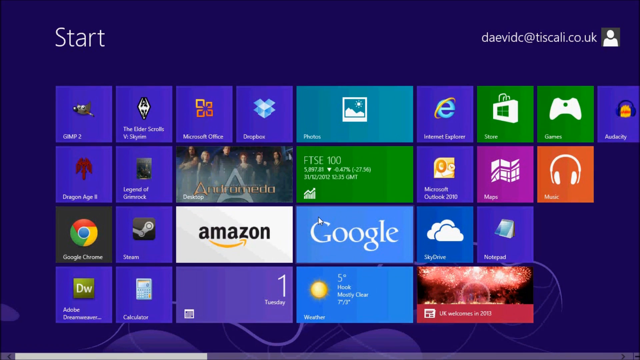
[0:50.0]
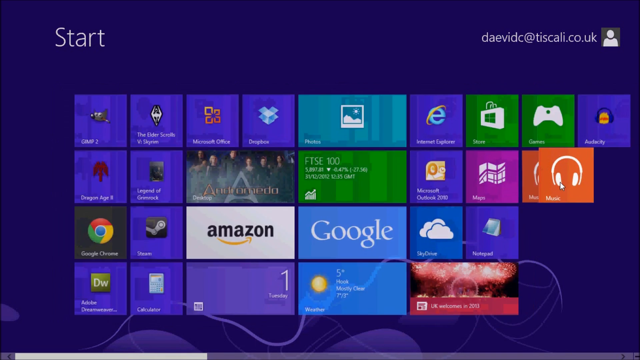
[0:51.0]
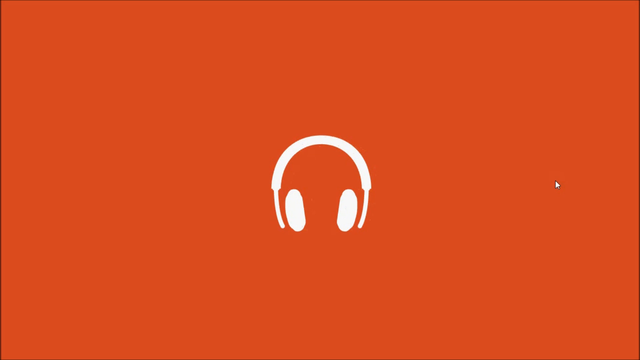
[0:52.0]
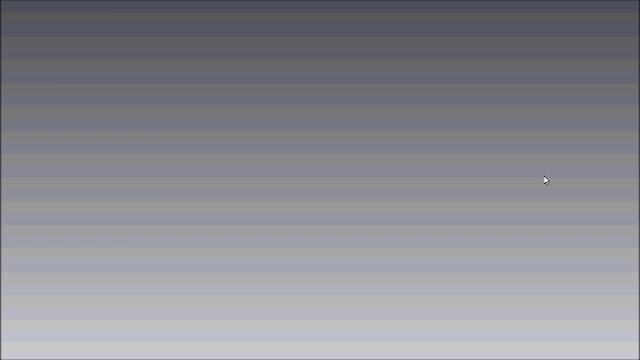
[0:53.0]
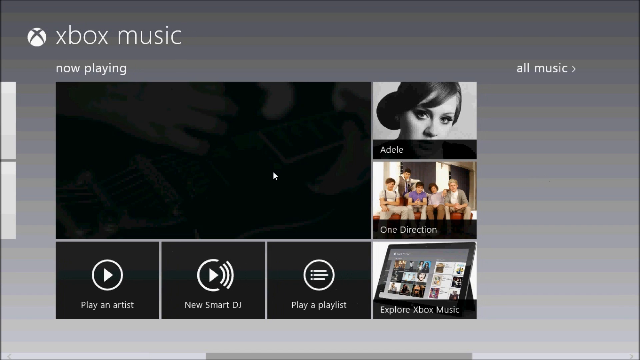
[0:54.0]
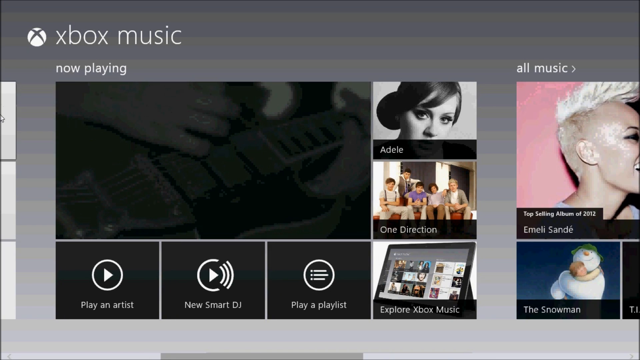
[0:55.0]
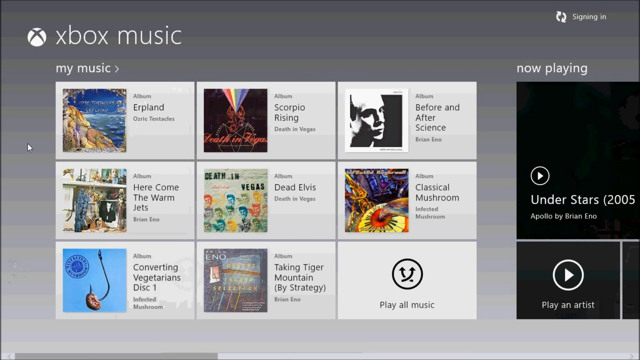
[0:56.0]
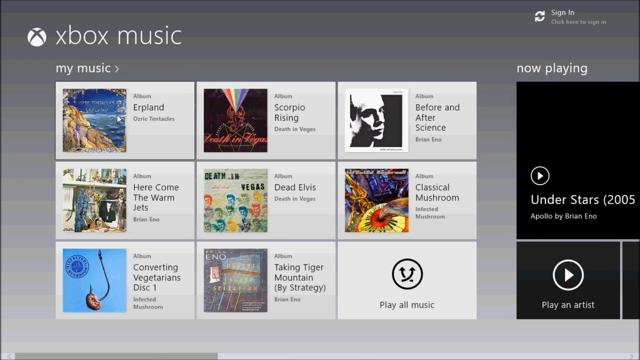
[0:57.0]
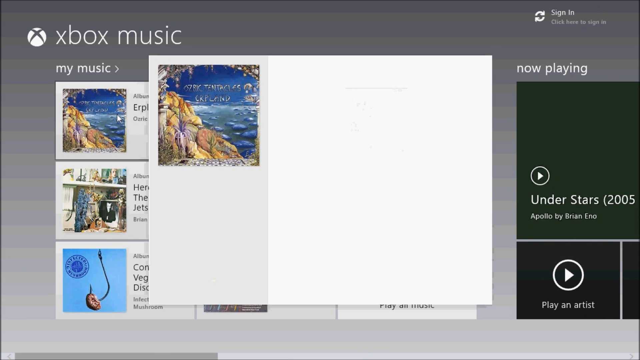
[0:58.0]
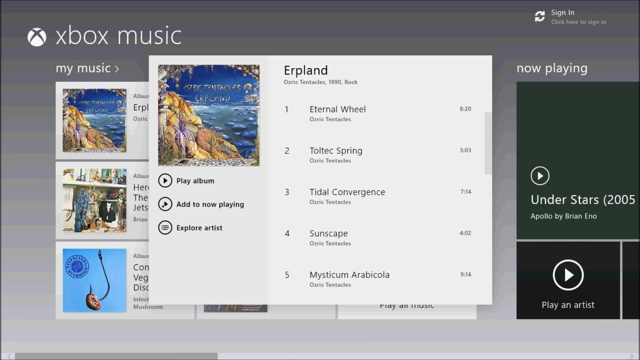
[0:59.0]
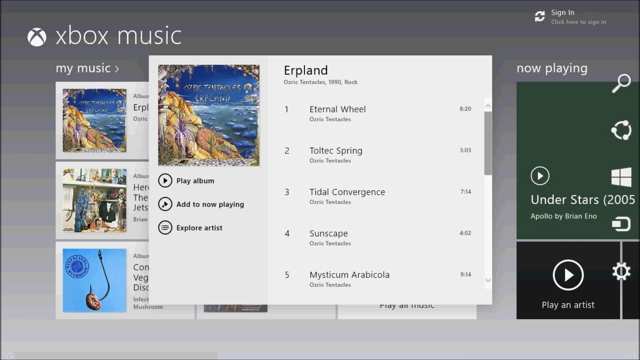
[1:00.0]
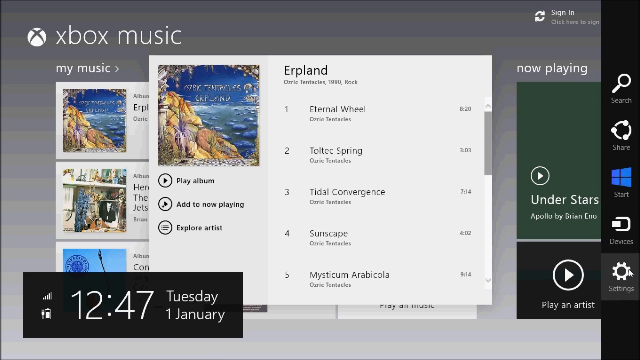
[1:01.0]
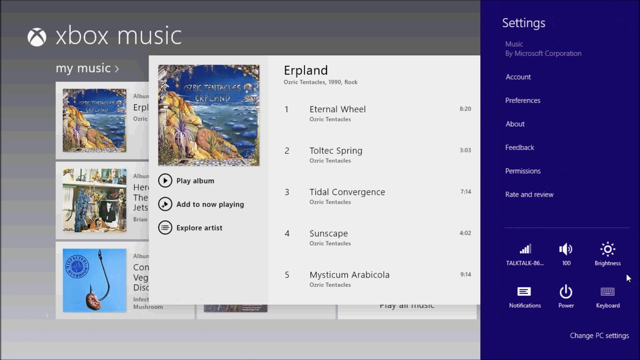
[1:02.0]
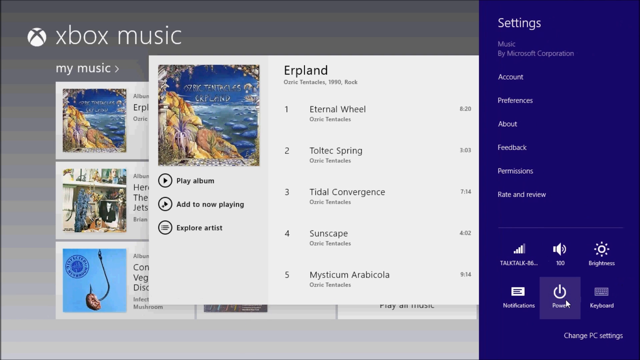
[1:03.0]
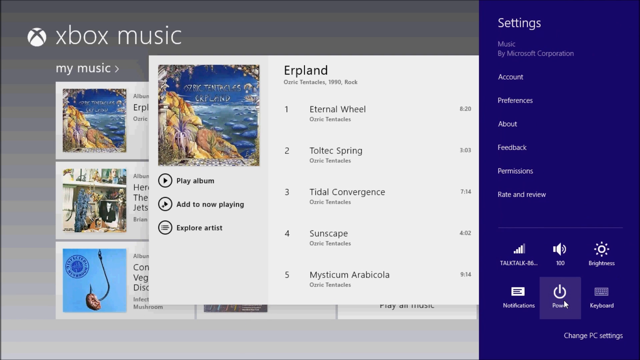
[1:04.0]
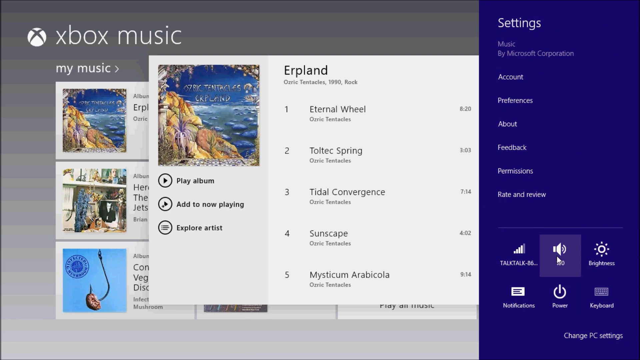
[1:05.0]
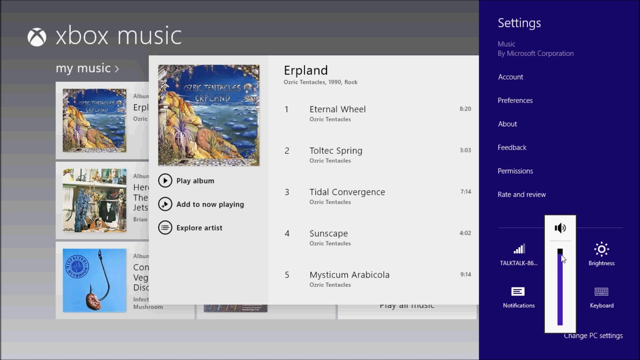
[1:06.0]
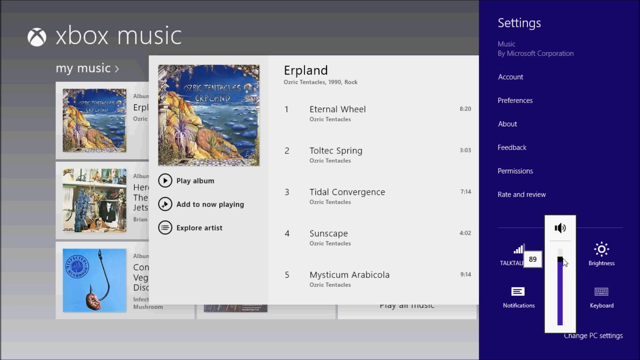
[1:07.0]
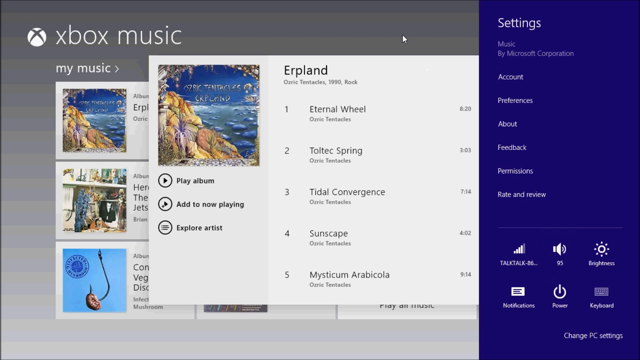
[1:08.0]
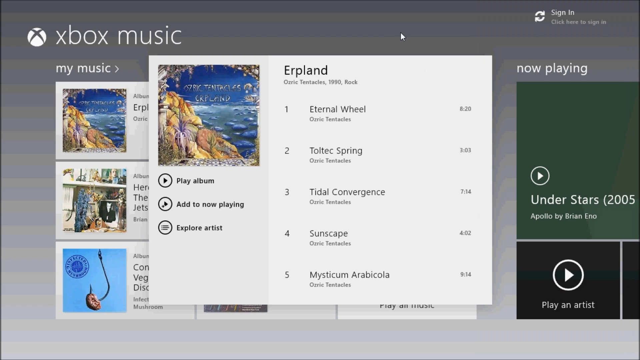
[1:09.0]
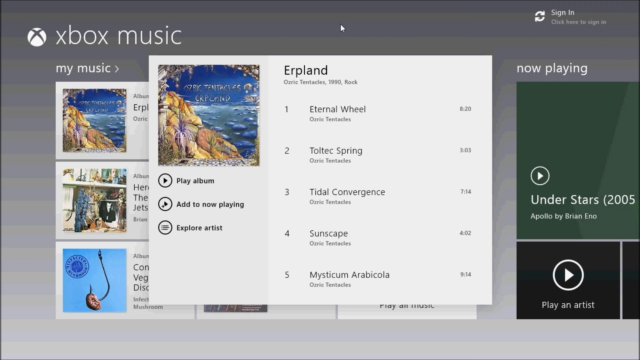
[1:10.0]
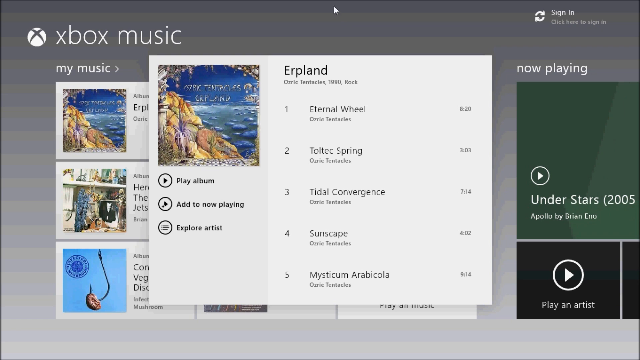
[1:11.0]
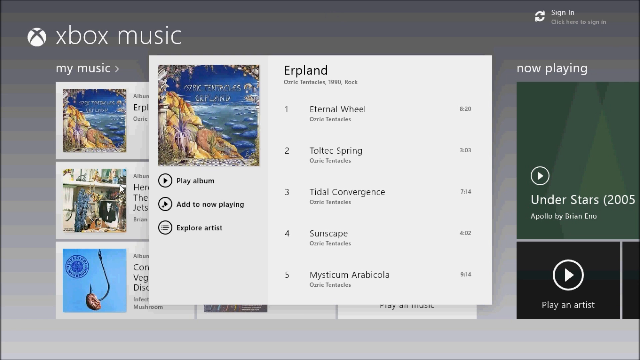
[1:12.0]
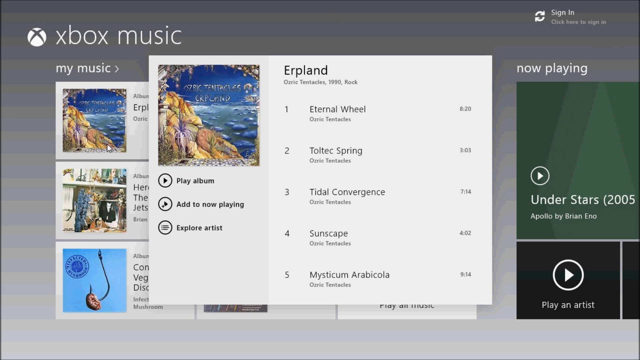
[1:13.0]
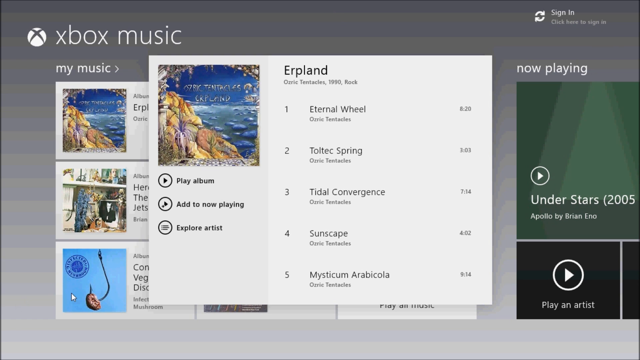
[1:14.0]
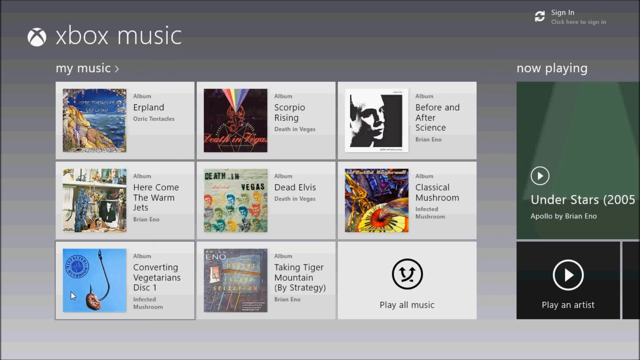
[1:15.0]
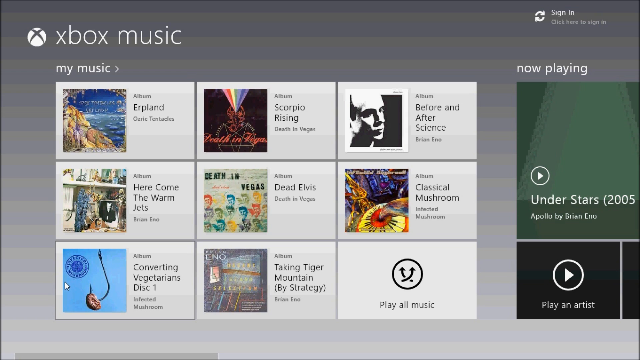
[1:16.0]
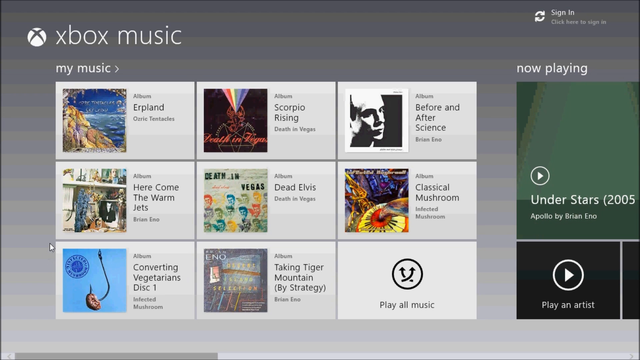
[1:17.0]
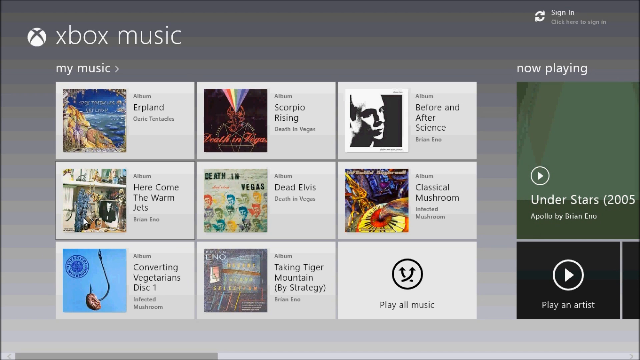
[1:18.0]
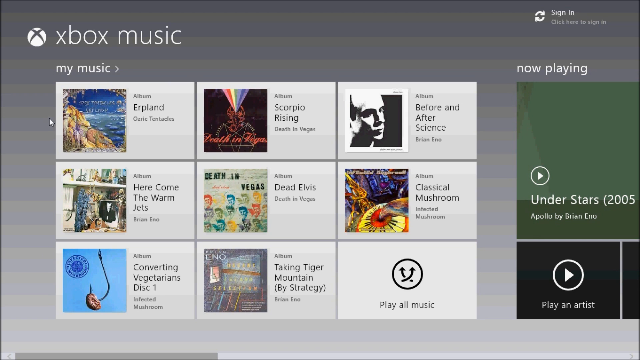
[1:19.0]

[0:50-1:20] The apps on what is apparently the person's desktop area, or possibly the PC version of an Xbox user interface, are shown, with the games laid out. One different app now appears, Microsoft Office, which apparently was moved from one place to another. Then what seems to be the headphones app opens, displaying music in the Xbox Music app. The first entry is spelled E-R-P-L-A-N-D, followed by "Scorpio Rising", "Here Come the Warm Jets", "Dead Elvis" and "Classical Mushroom", and in the final area there are two other albums. The person clicks on the side, and settings pop out with account, preferences, about and feedback.